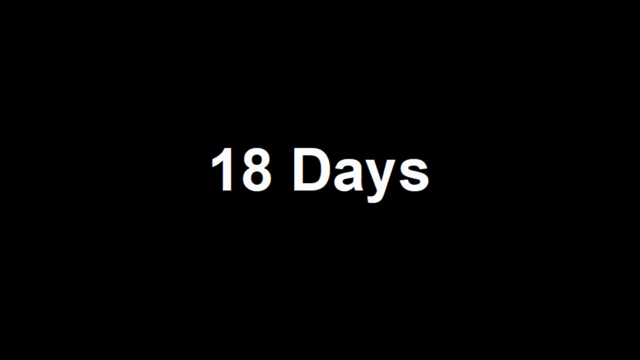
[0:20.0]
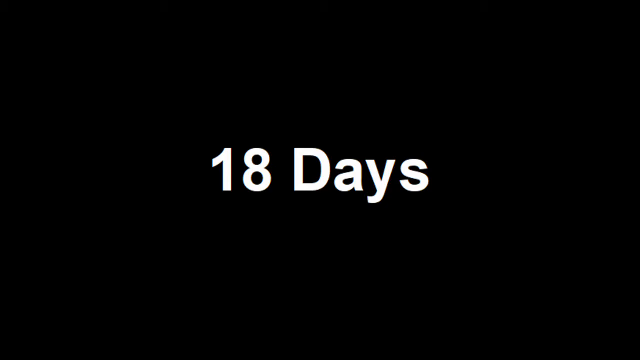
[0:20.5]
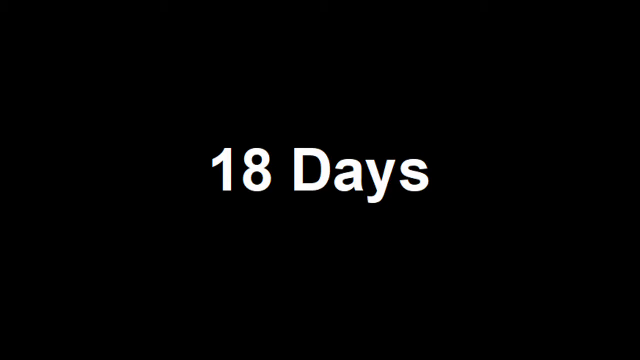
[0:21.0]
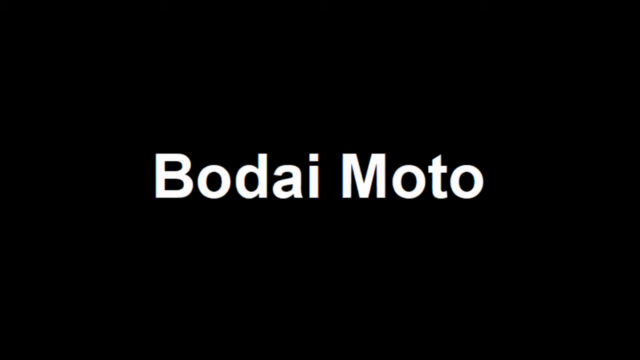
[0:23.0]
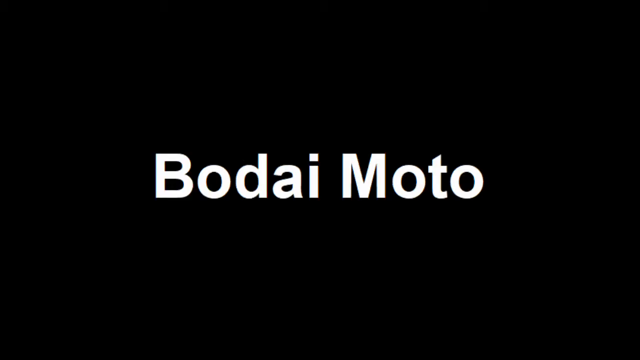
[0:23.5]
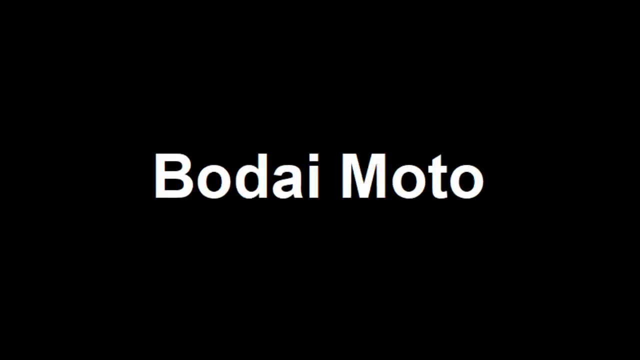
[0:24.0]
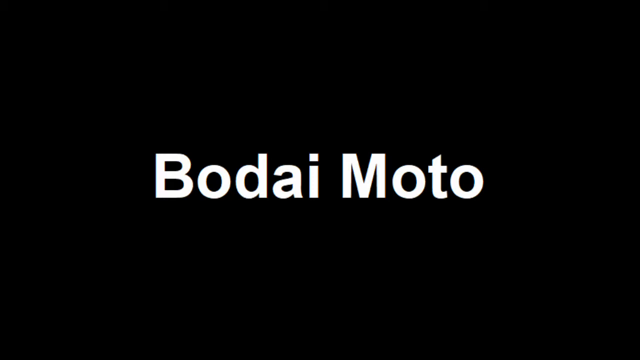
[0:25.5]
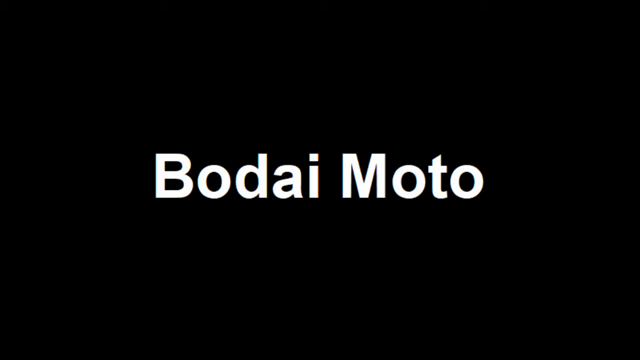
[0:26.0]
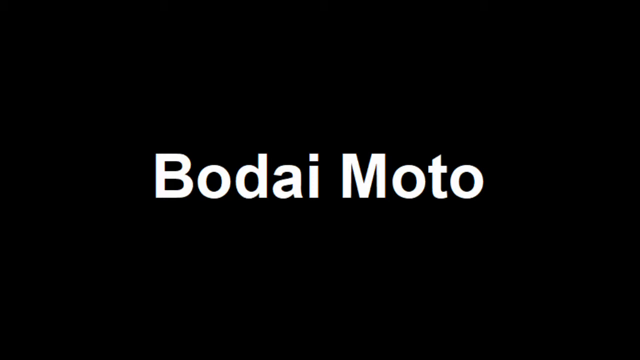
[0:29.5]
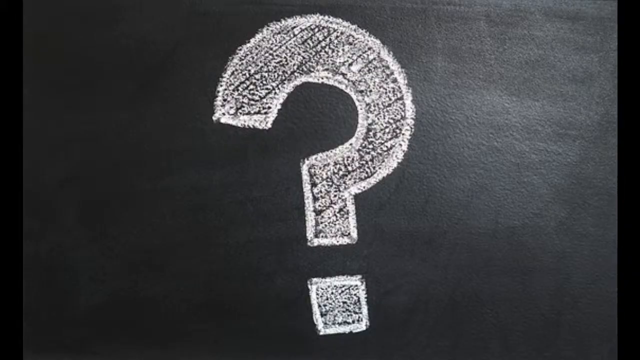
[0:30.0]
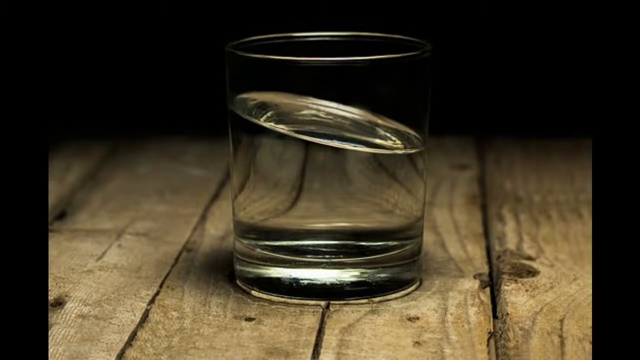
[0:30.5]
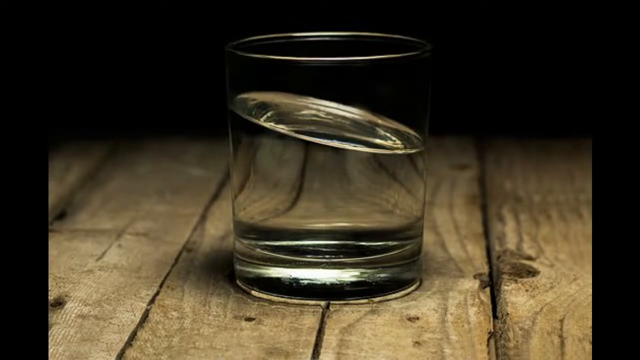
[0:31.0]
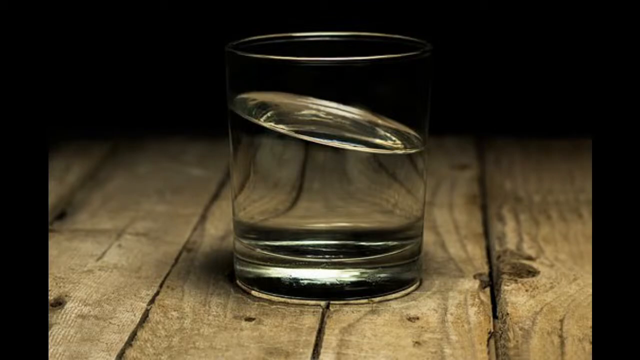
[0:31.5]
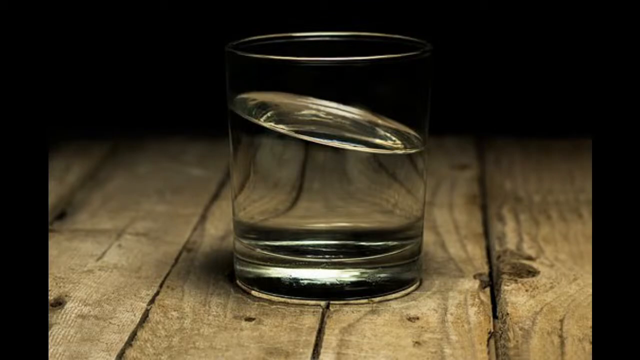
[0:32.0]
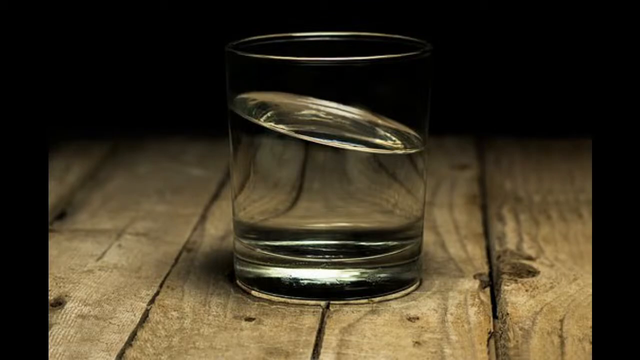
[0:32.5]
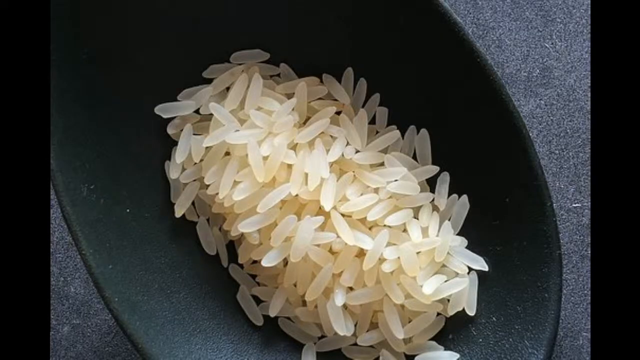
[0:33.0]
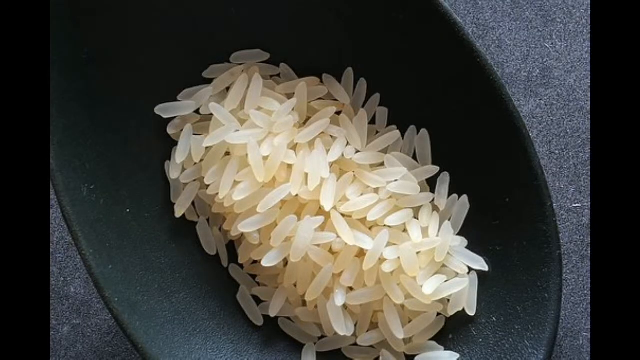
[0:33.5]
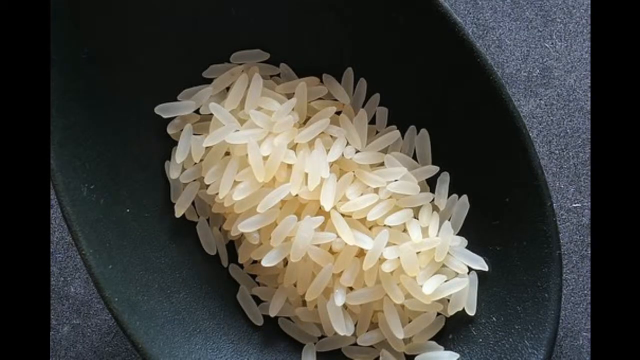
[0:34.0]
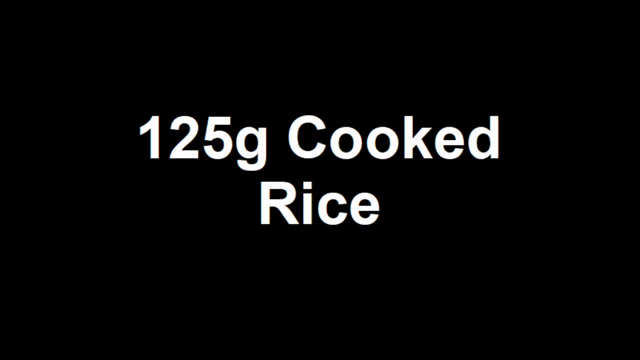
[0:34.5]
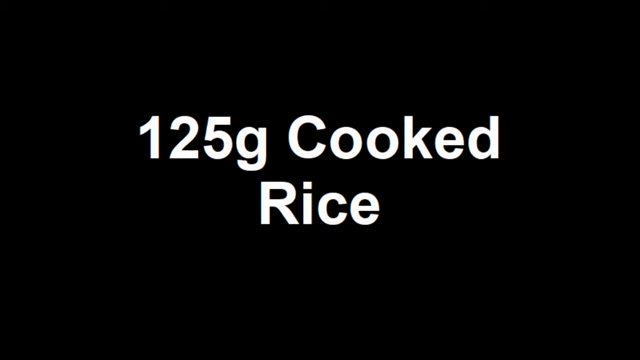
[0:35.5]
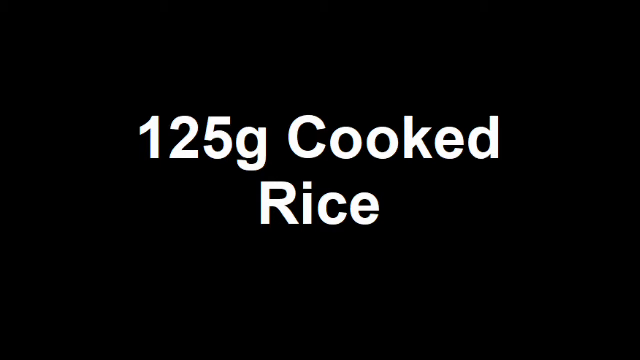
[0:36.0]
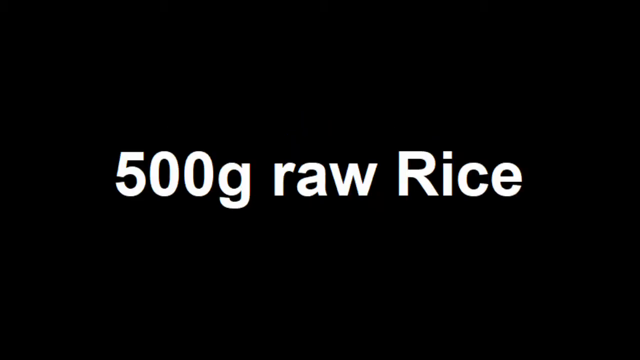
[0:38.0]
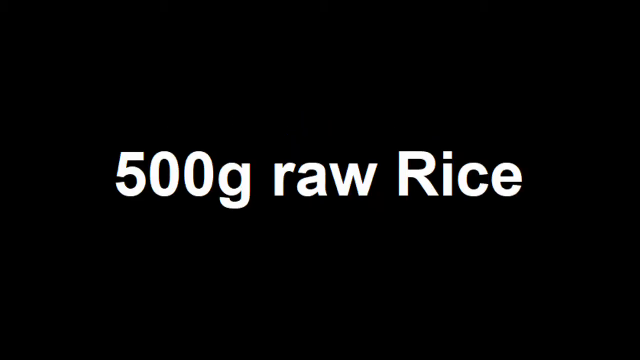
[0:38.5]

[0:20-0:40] A title slide reads "18 days," followed by the text "Bodai Moto." Next comes a picture of a glass of water whose water line is kind of tilted to the side, as if the water were being jostled. A couple of uncooked rice pieces in a bowl are then shown, followed by another title screen reading "125 grams cooked rice. 500 grams raw rice. 18 days." The video appears to be a how-to on making sake at home.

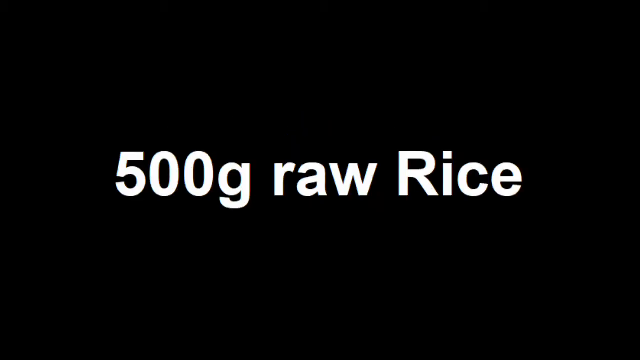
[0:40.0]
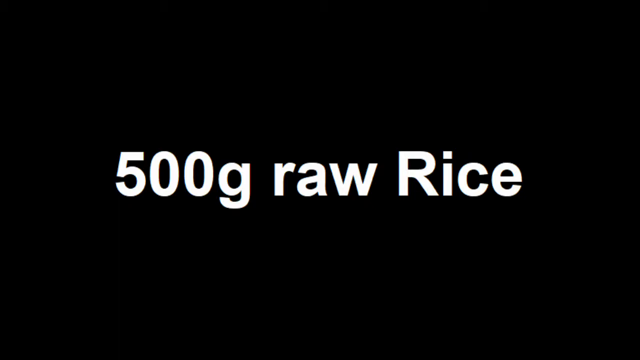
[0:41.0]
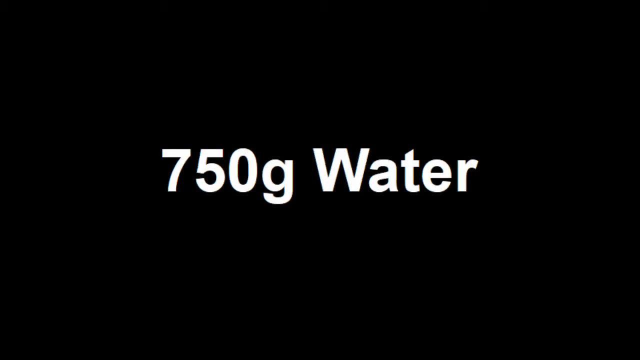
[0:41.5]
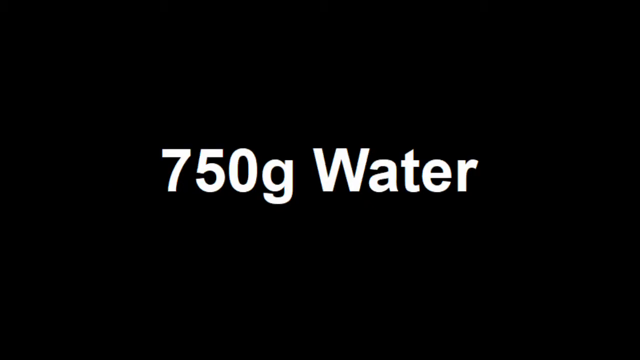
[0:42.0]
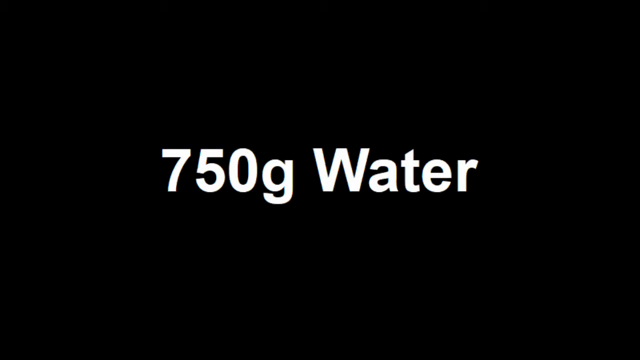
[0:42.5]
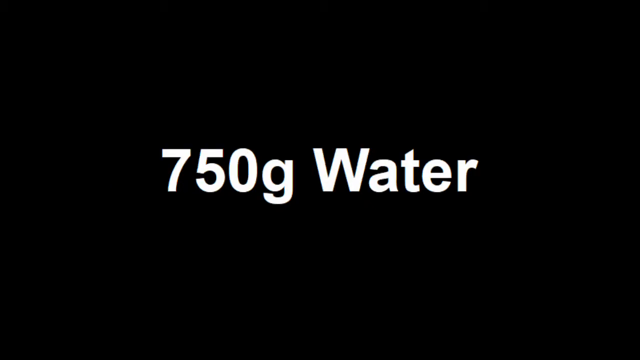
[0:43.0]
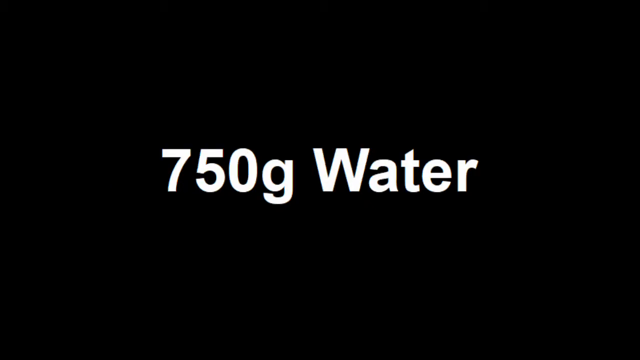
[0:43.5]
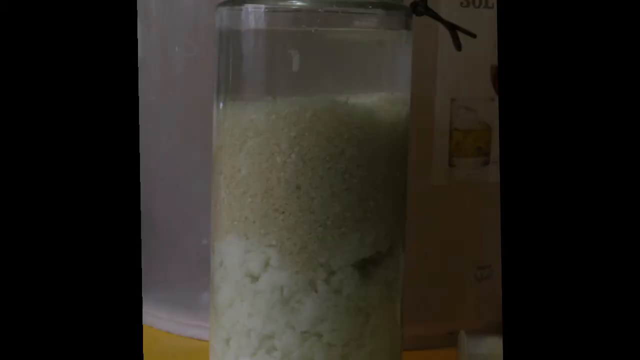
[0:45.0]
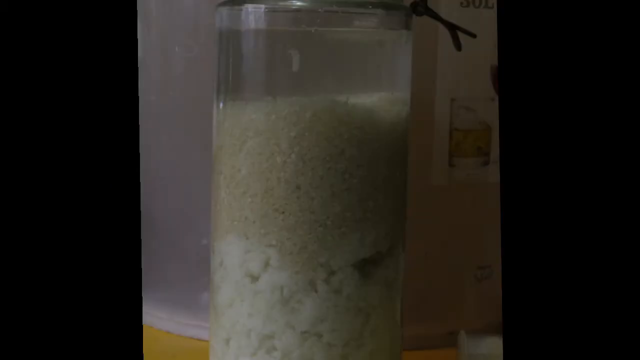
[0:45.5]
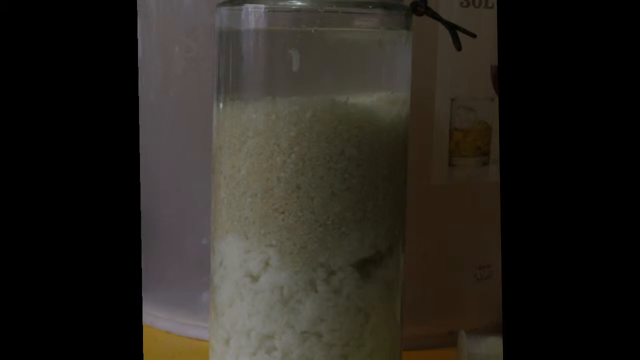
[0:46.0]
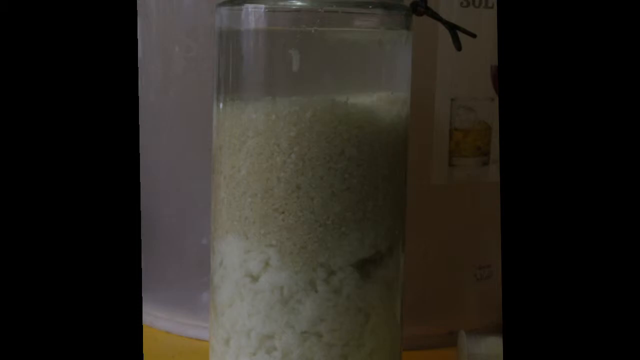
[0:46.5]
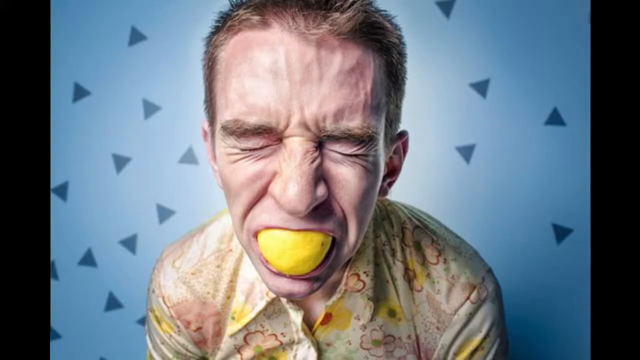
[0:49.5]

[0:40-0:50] A black title screen reads "500 grams raw rice, 750 grams water." The combination then appears in a large container, with the cooked rice at the bottom and the raw rice on top, all floating in the water solution. The container has a lid on it and looks like it is sitting in a fridge, or maybe in someone's room. These seem to be ingredients and instructions for making sake at home and storing it.